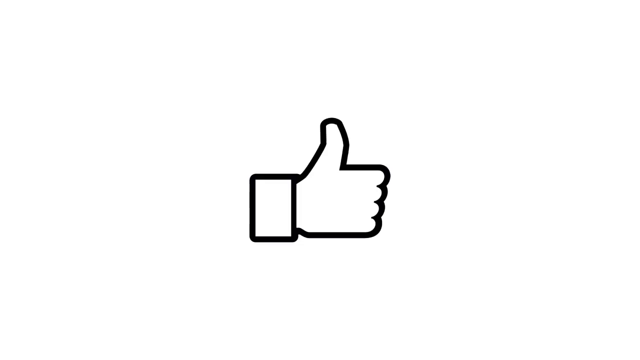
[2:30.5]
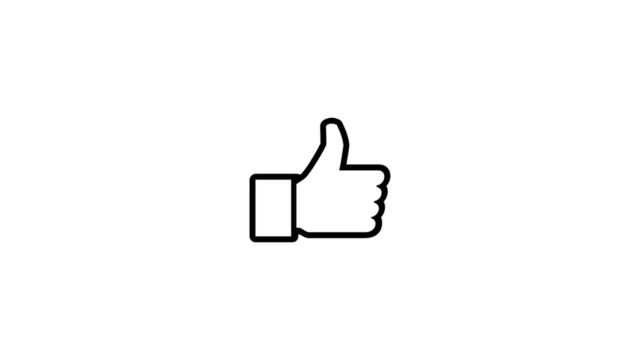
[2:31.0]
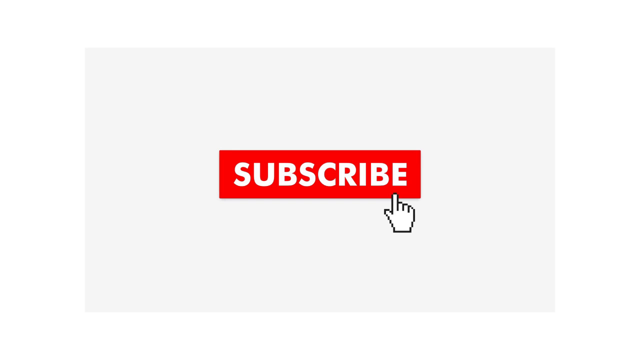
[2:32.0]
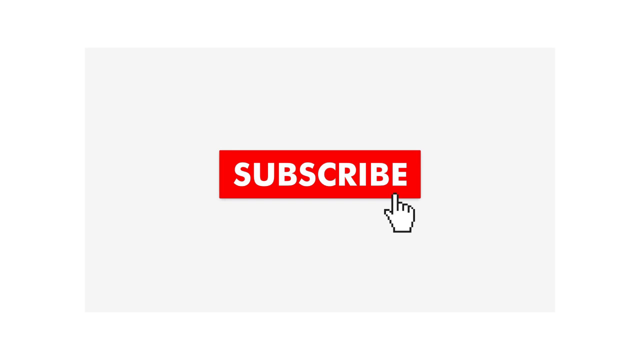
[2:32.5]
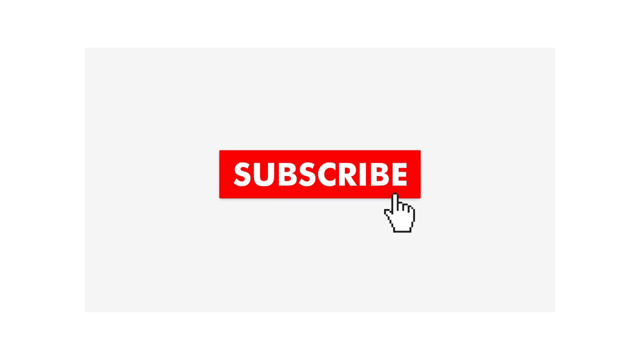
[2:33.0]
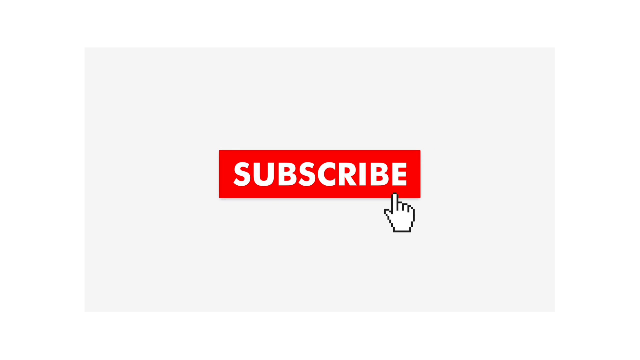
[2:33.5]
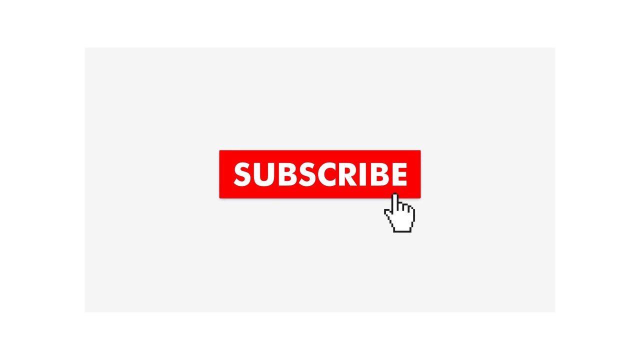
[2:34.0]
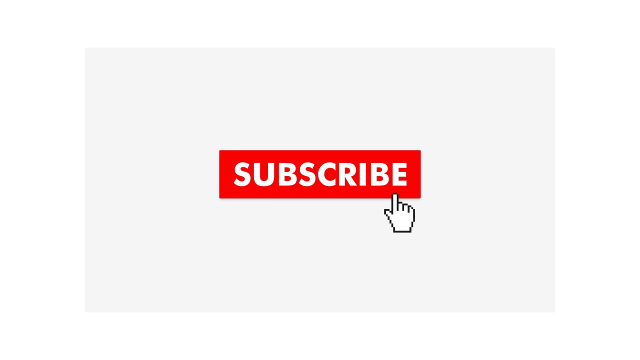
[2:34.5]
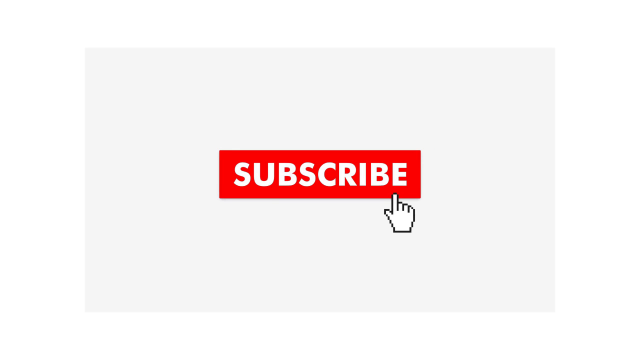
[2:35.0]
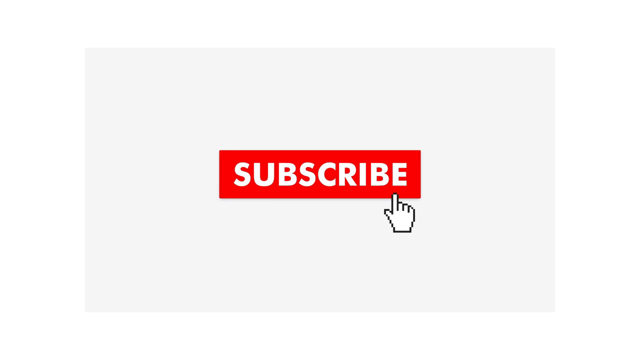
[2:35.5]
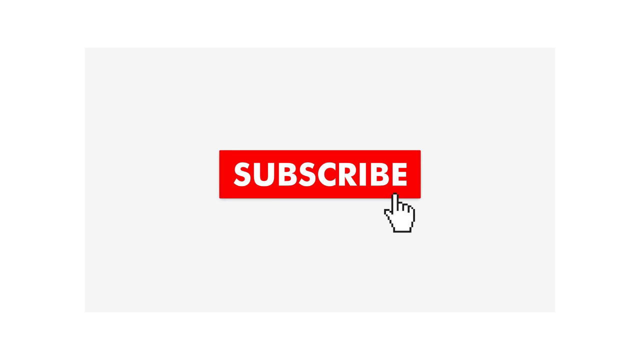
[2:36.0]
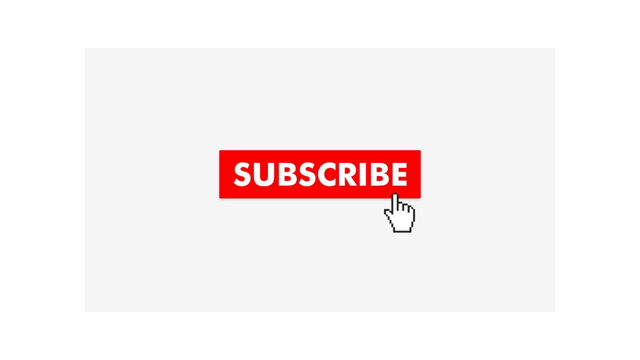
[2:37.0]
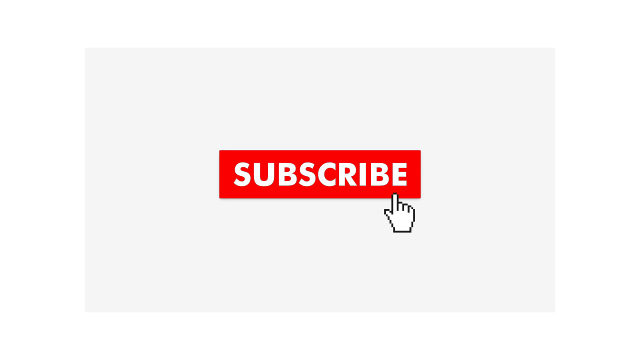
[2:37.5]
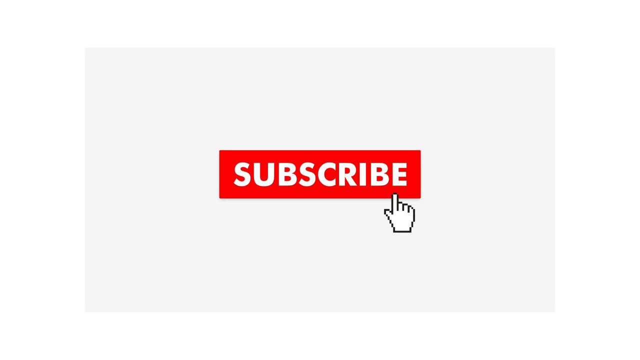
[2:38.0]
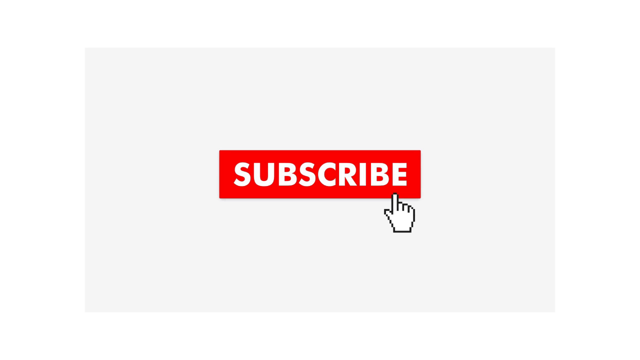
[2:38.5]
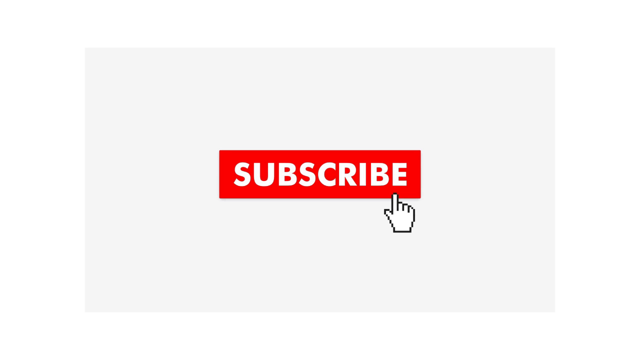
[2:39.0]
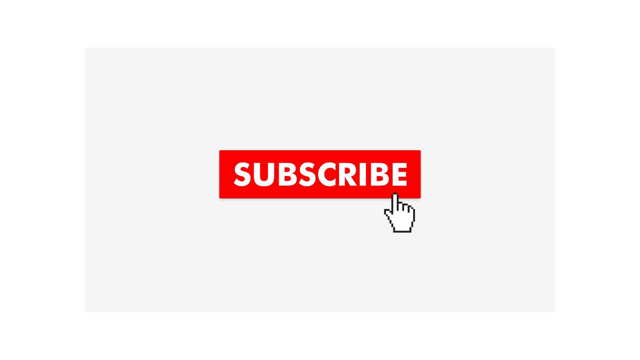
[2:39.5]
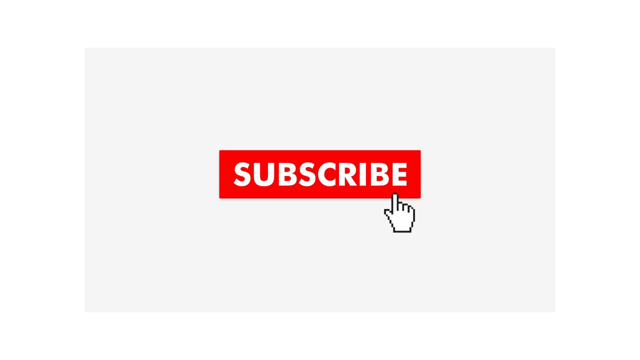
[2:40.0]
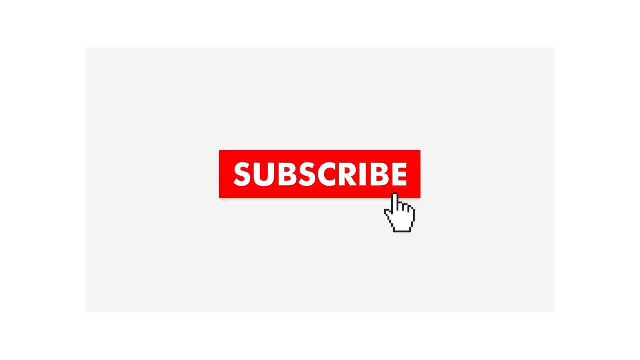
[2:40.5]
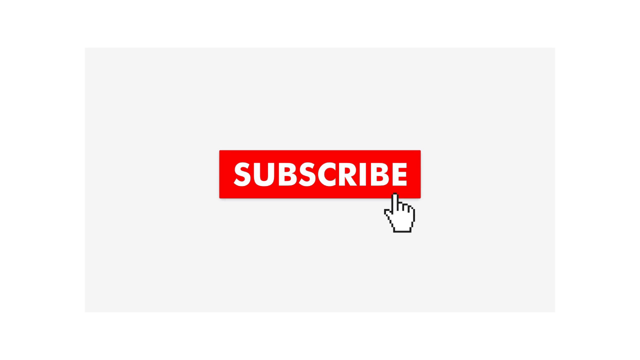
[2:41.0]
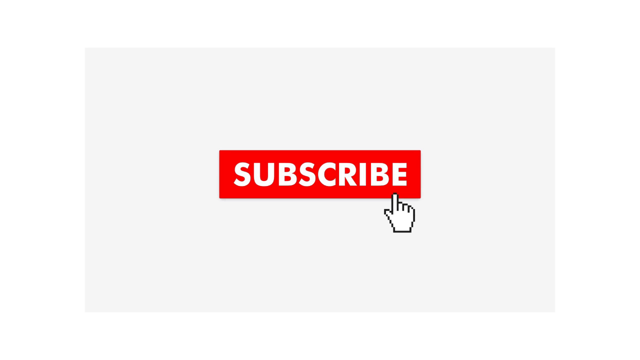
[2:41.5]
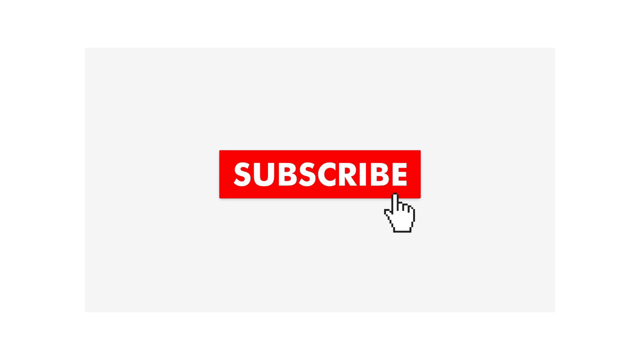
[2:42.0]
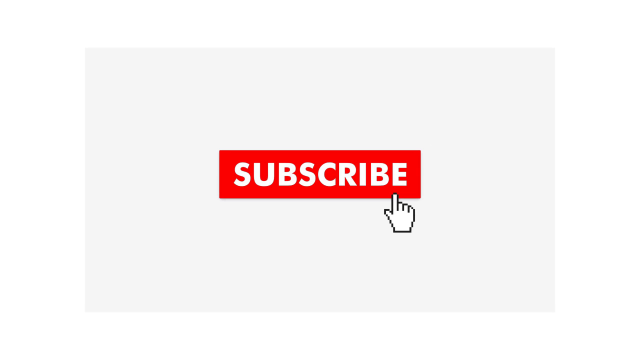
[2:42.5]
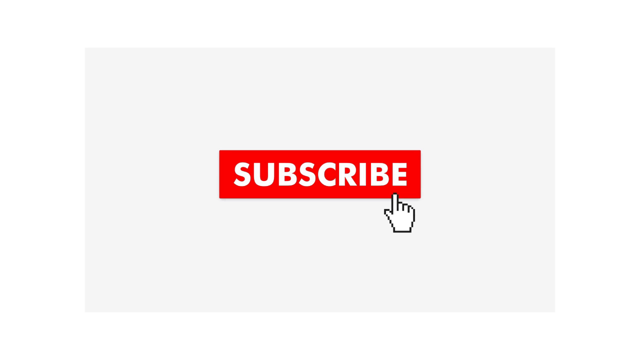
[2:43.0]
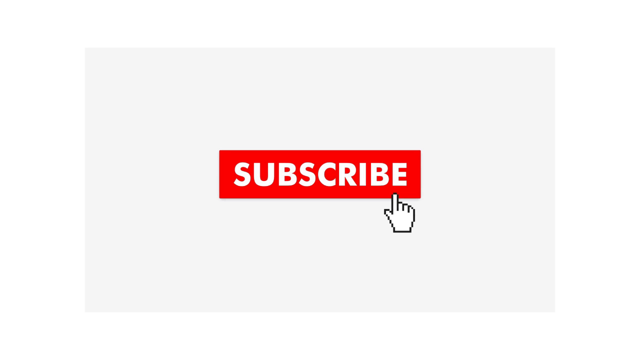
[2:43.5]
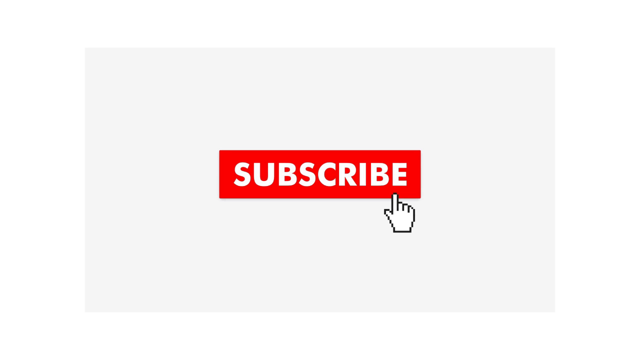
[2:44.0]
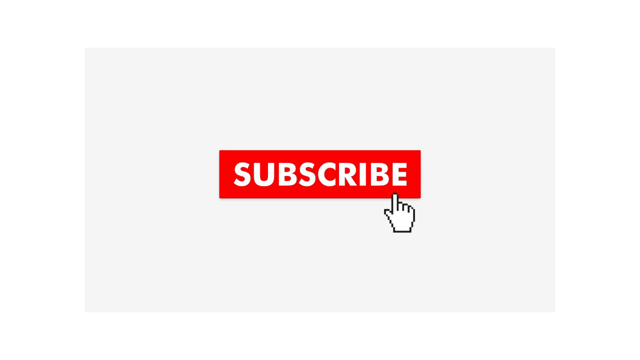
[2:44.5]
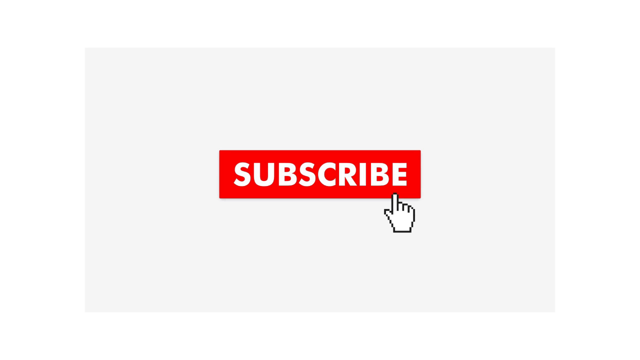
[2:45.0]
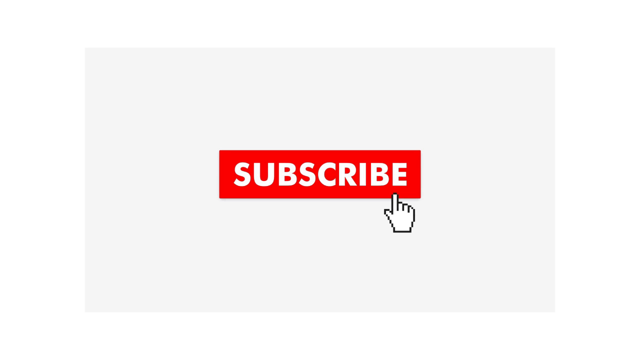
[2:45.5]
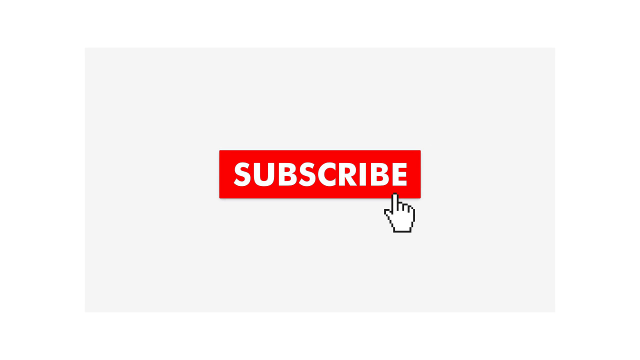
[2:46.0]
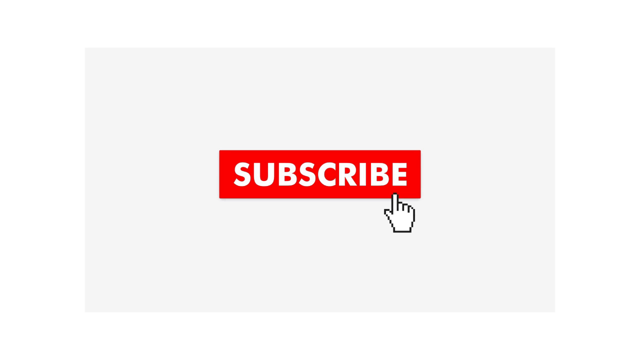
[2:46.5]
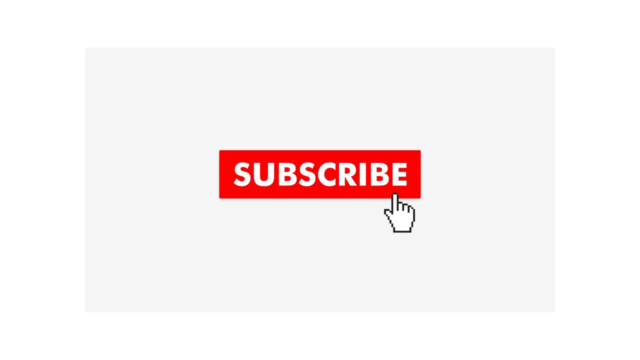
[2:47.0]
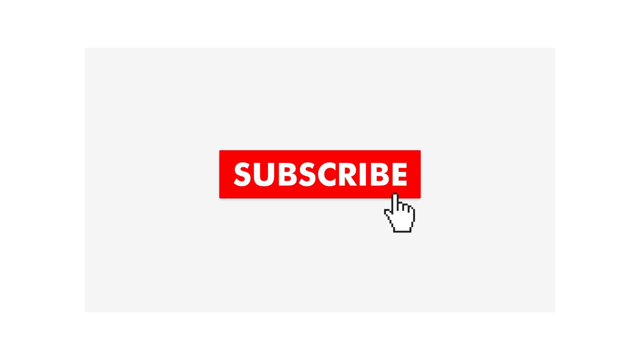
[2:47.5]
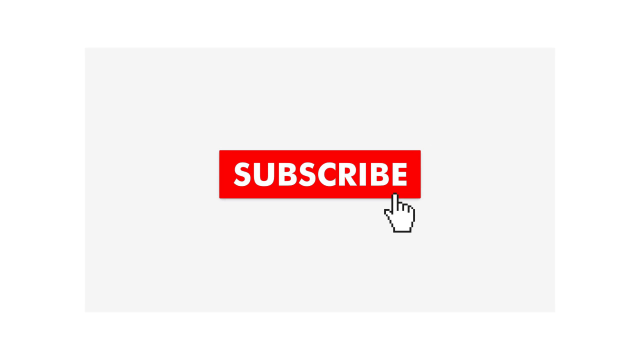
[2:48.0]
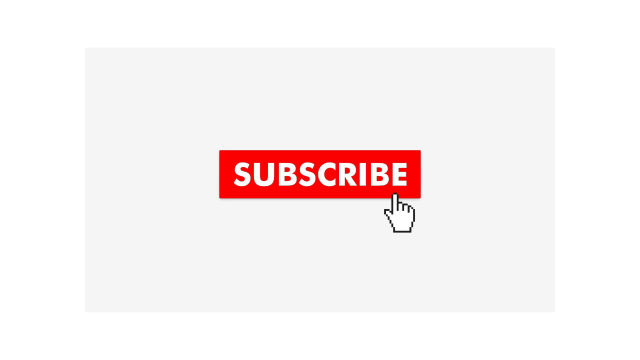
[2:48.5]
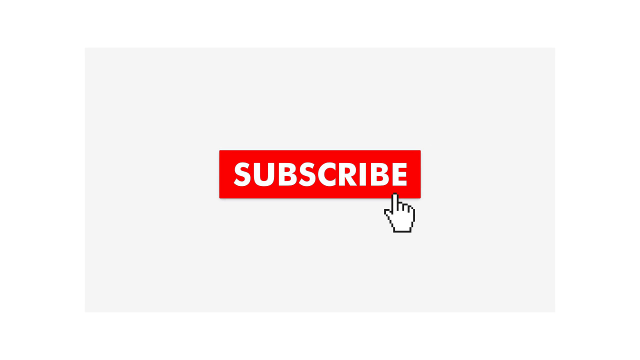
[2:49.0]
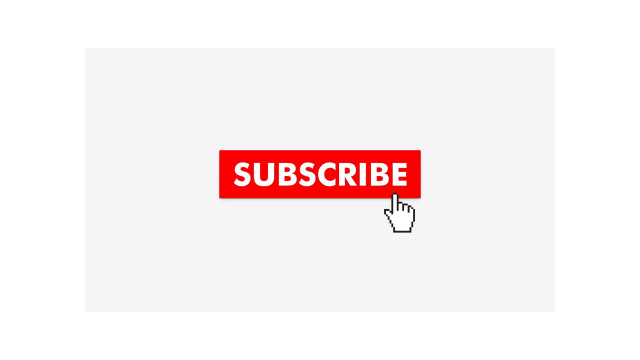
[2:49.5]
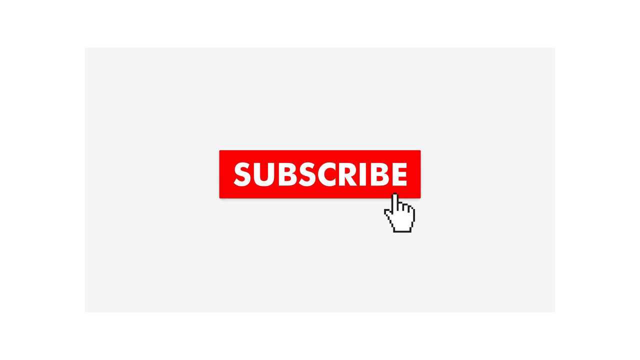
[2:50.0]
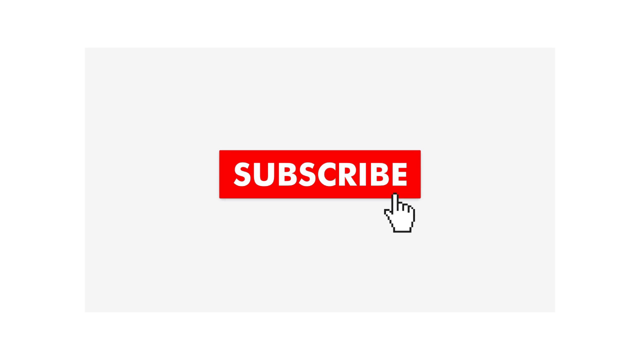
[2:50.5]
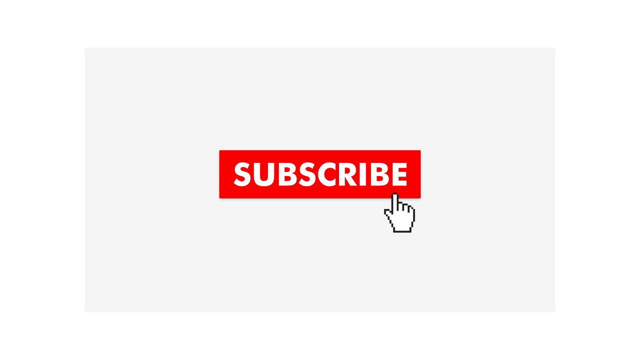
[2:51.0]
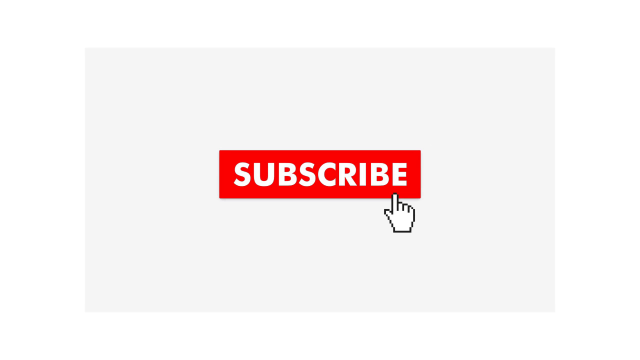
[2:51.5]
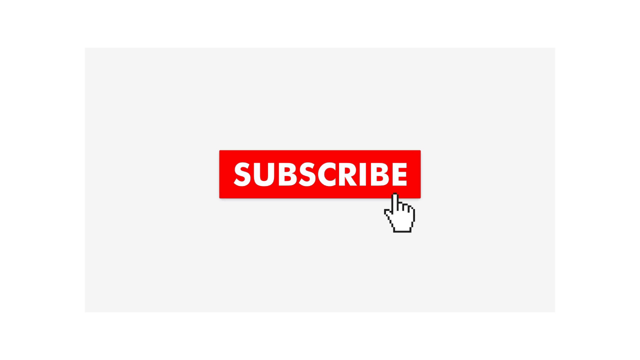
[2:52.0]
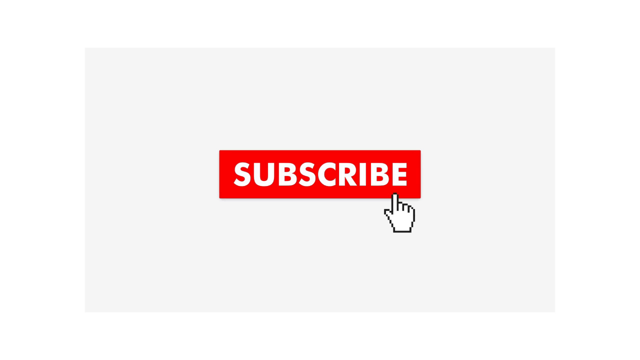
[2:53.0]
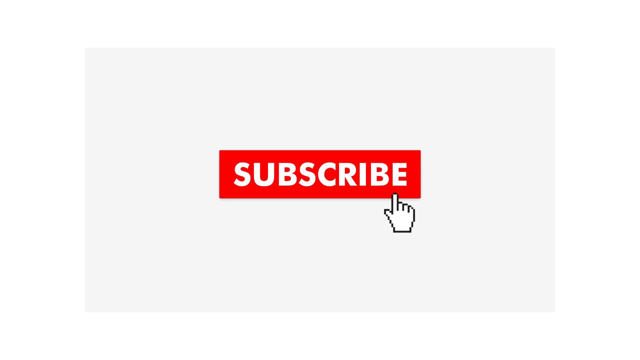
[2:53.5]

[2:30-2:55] The word "subscribe" appears in white in a red rectangular box. An image of a white hand outlined in black, with the thumb sticking out and the index finger sticking up, clicks on the subscribe button; the other fingers appear to be tucked in a little, making the index finger look like it protrudes. The index finger touches the bottom of the subscribe bar. Around the button is gray, with a white border around the gray, so the light colors make the subscribe button almost pop out of the screen. The only text is "subscribe."